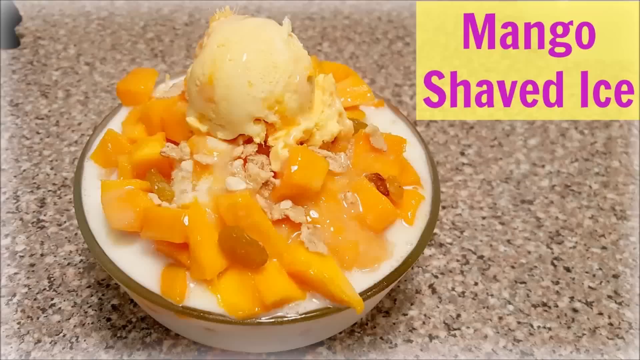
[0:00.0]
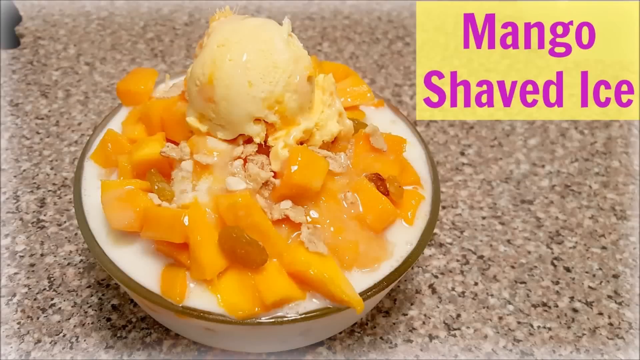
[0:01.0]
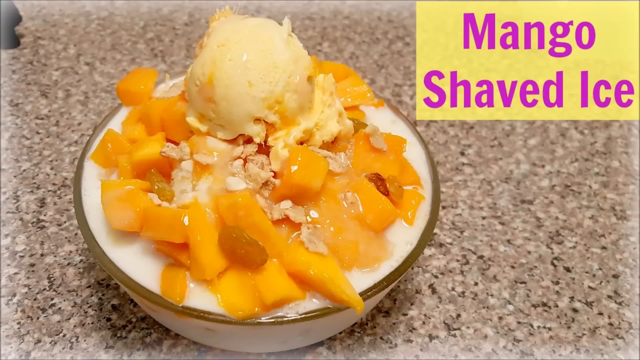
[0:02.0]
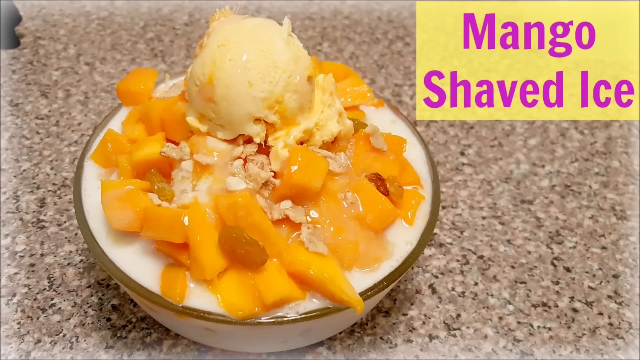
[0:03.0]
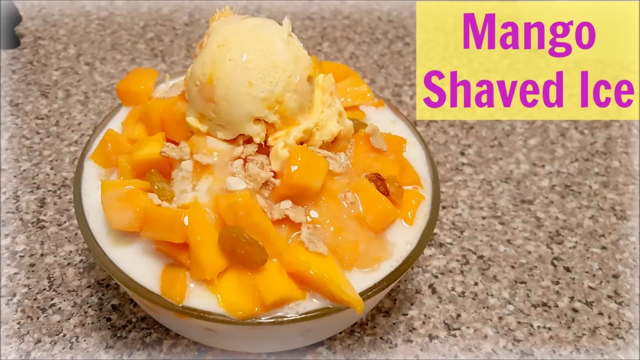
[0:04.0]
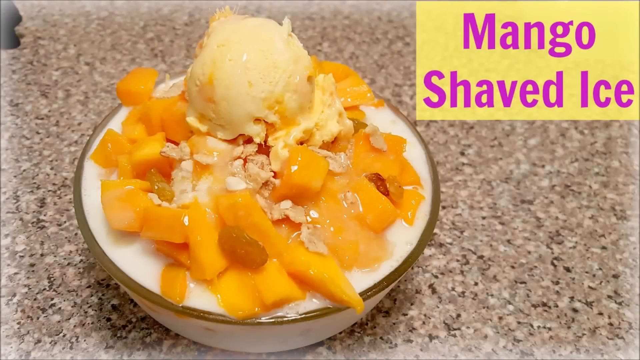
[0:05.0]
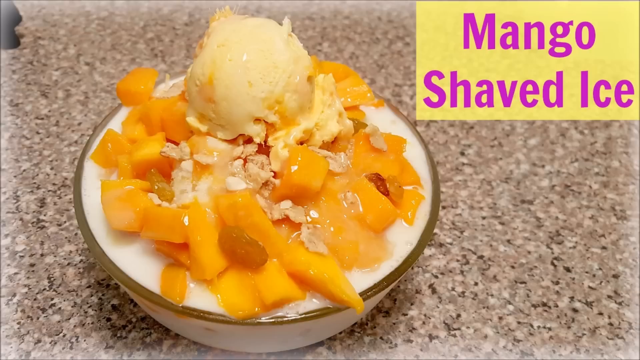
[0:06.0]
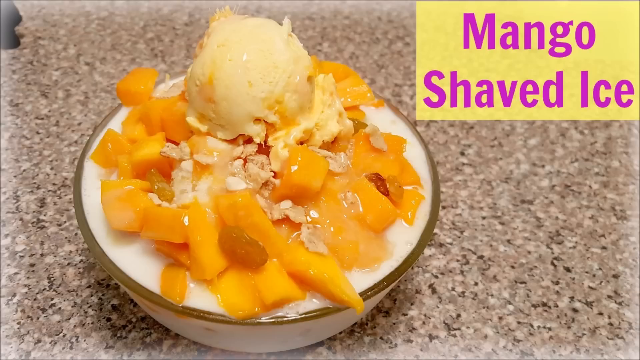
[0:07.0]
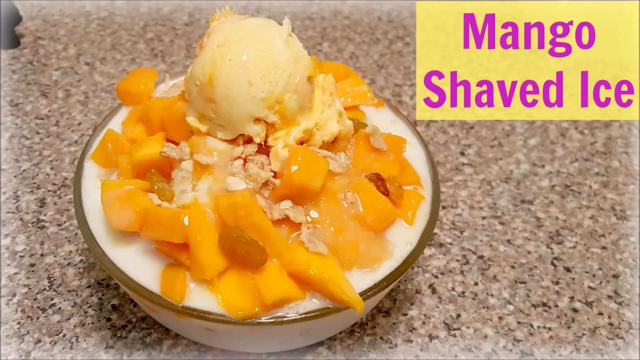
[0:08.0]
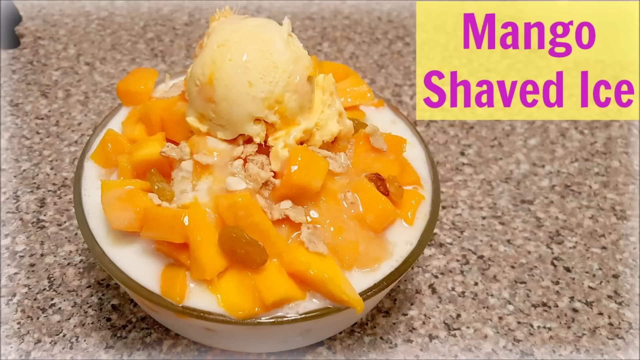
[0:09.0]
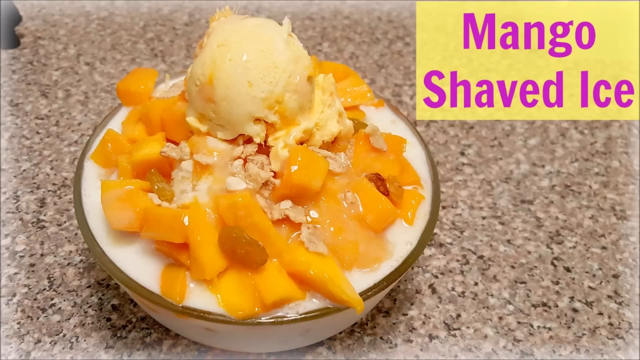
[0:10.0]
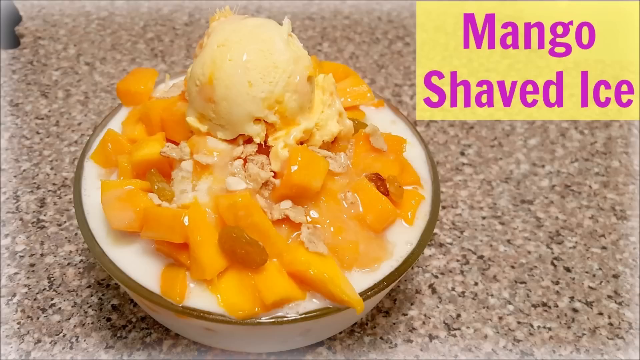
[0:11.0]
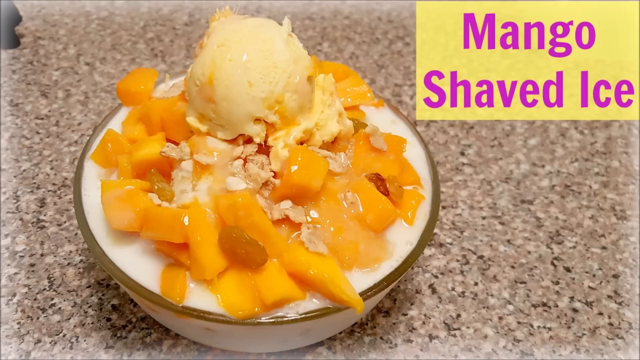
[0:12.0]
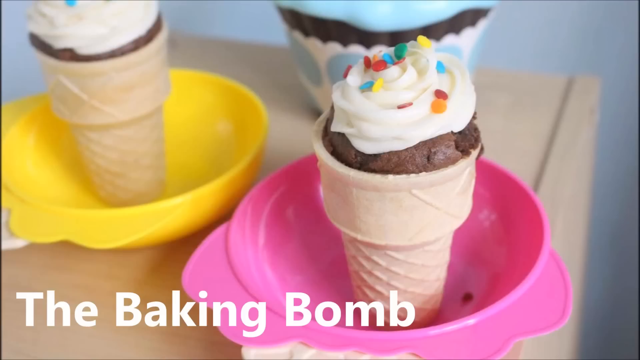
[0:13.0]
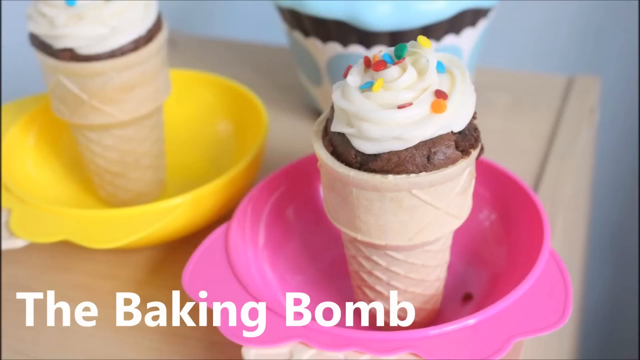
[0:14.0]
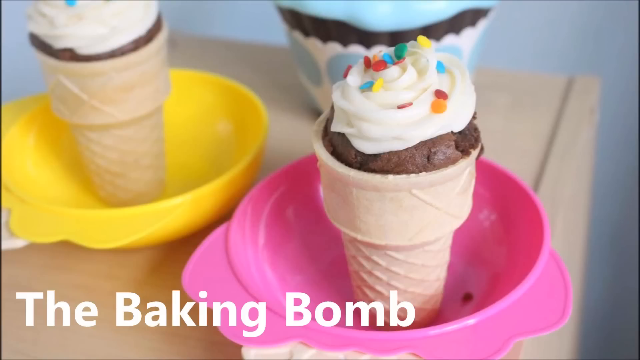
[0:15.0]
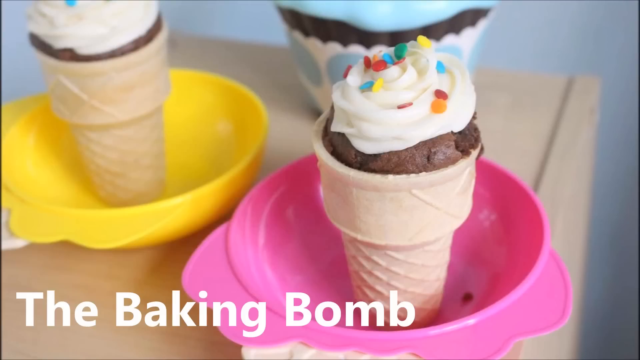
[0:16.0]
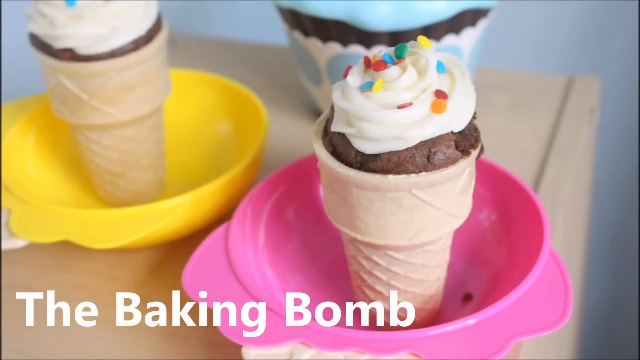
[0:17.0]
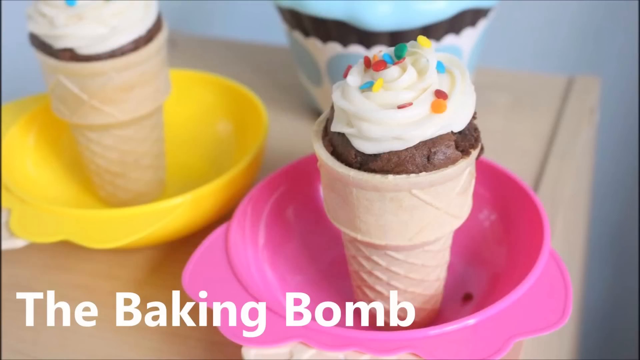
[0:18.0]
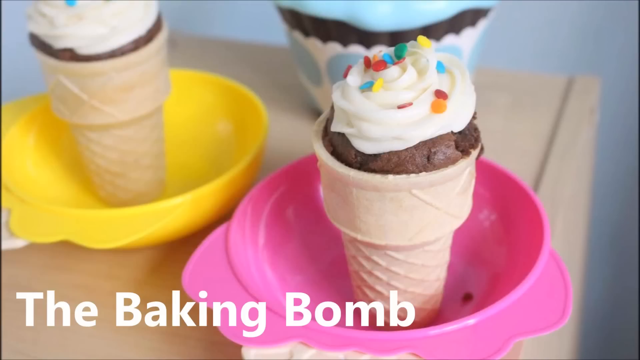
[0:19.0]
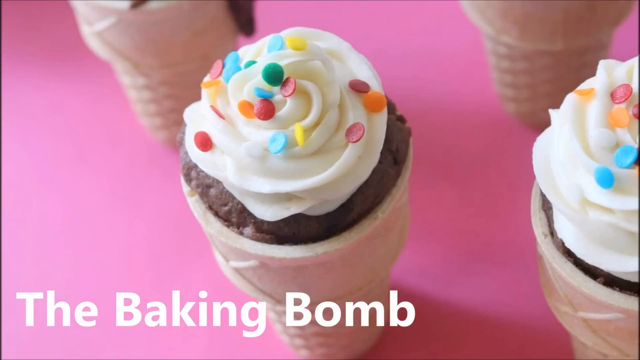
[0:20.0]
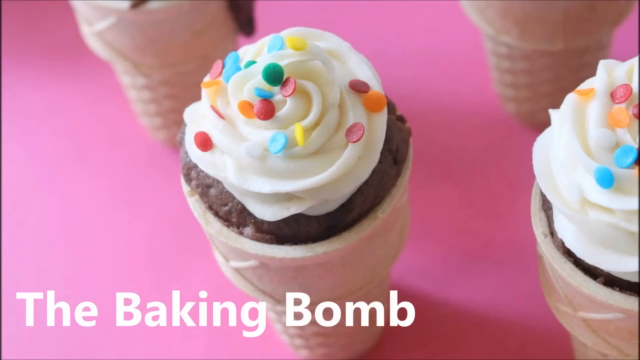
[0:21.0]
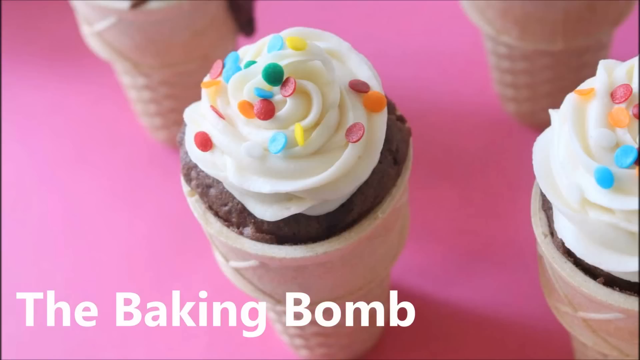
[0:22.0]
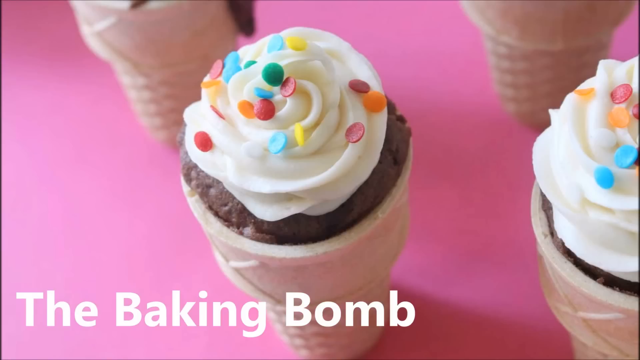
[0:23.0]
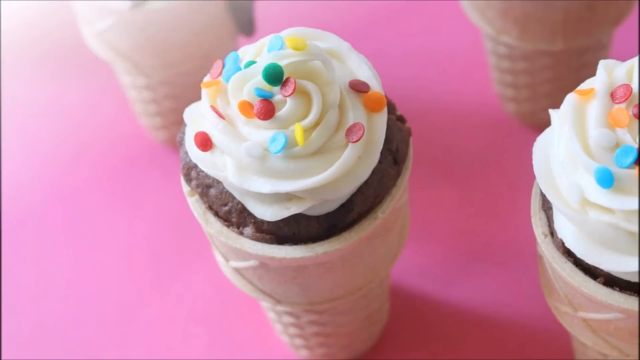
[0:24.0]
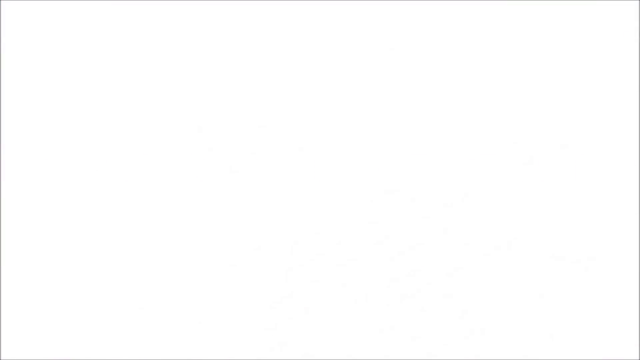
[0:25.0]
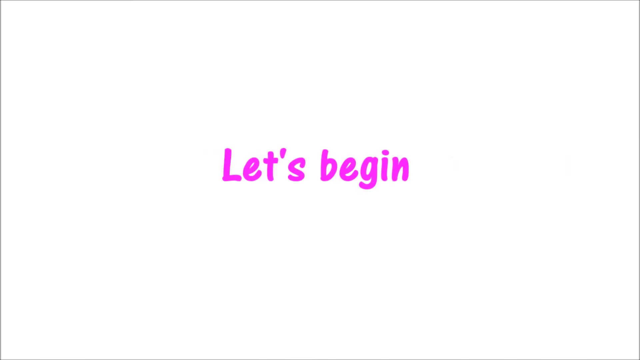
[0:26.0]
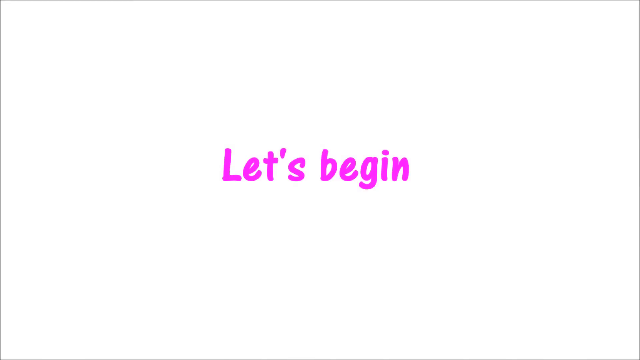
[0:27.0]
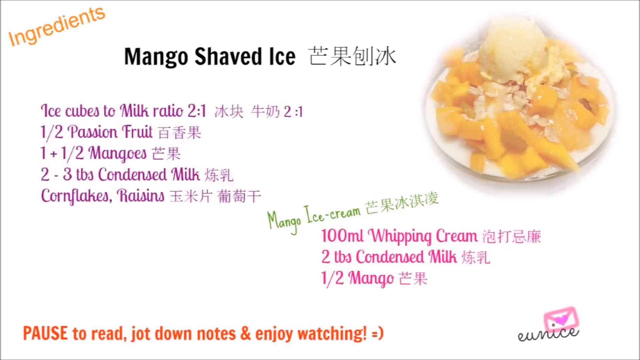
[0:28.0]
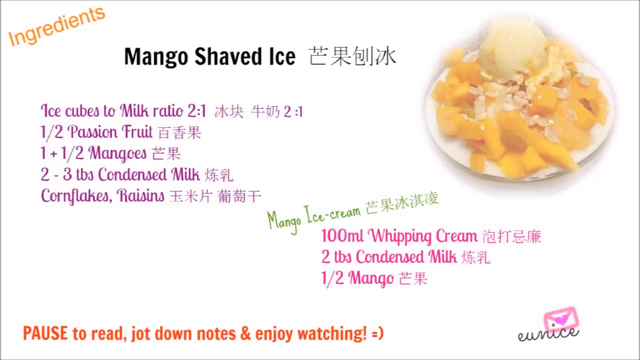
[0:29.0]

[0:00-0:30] Mango shaved ice is shown first, with purple text in the top right-hand corner of the screen. The shaved ice contains large chunks of fresh mango and looks sort of like a mango sorbet. The video then transitions to a screen with text that says "The Baking Bomb", showing a cupcake-looking ice cream cone with what appears to be some sort of brownie or chocolate baking underneath. Text then says "Let's begin". A mango shaved ice recipe follows, listing the ingredients: an ice cube to milk ratio of 2 to 1, half a cup of passion fruit, 1 1/2 mangoes, condensed milk, cornflakes, raisins, 100 ml of whipping cream, 2 tablespoons of condensed milk, and half a mango.